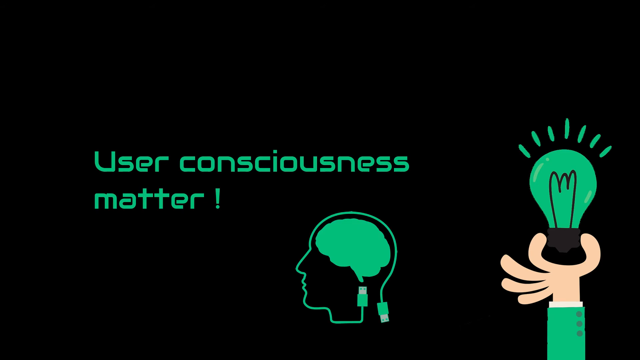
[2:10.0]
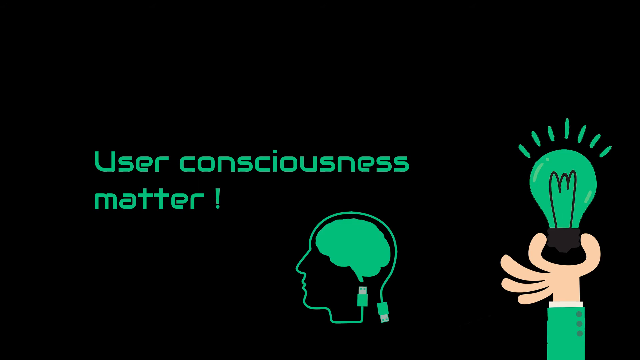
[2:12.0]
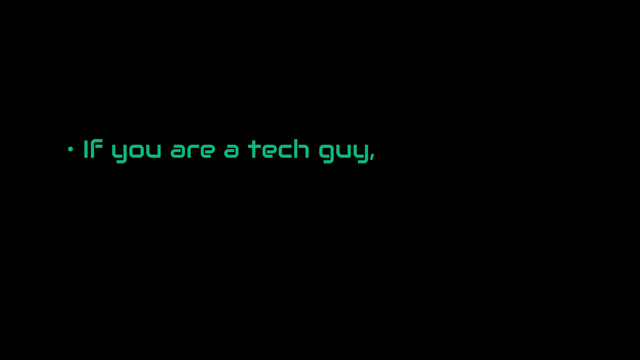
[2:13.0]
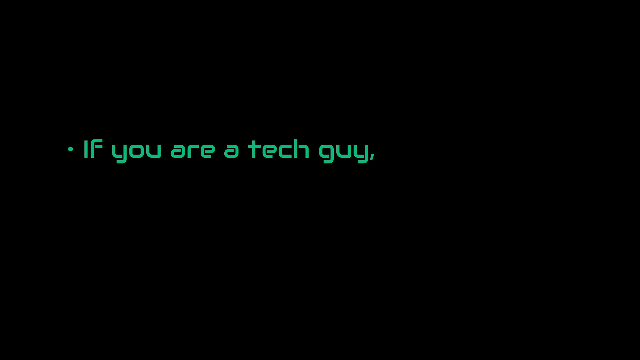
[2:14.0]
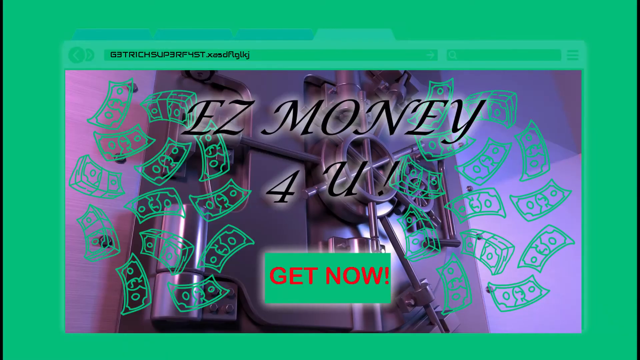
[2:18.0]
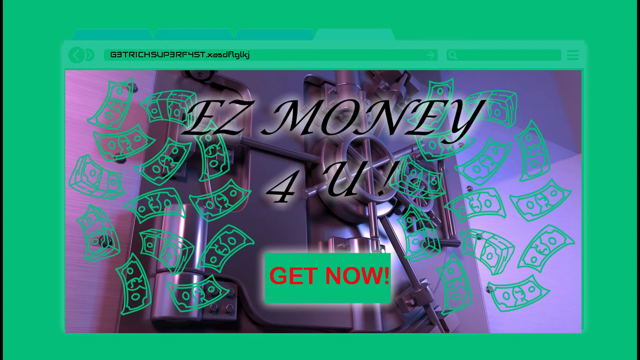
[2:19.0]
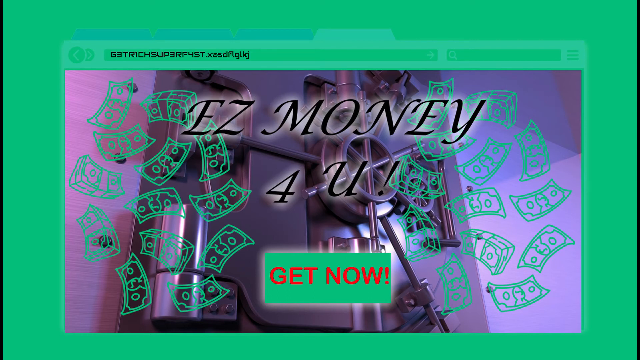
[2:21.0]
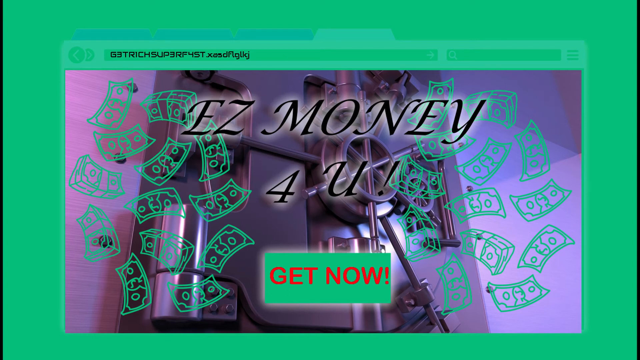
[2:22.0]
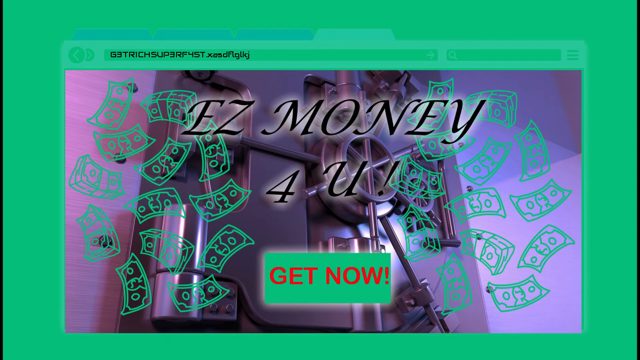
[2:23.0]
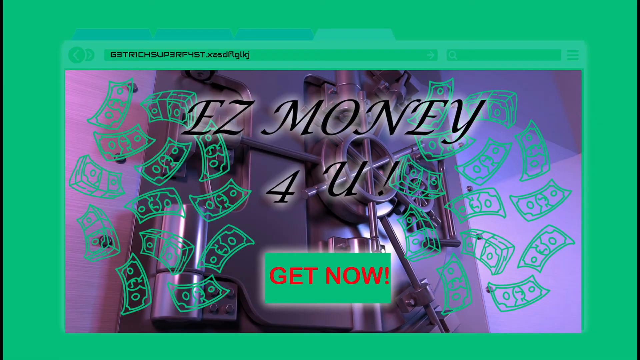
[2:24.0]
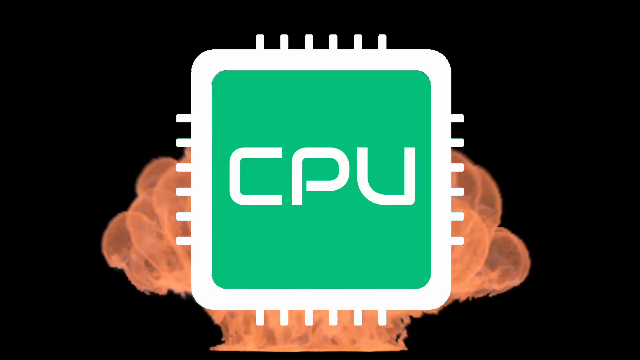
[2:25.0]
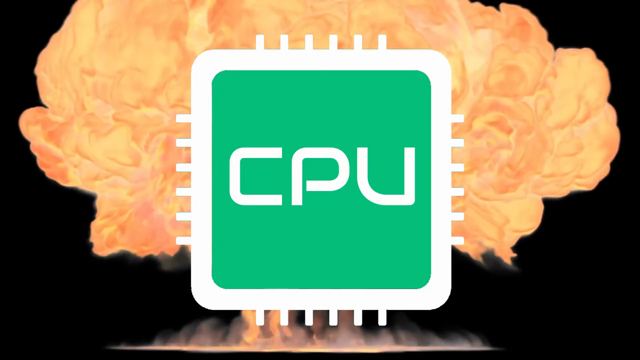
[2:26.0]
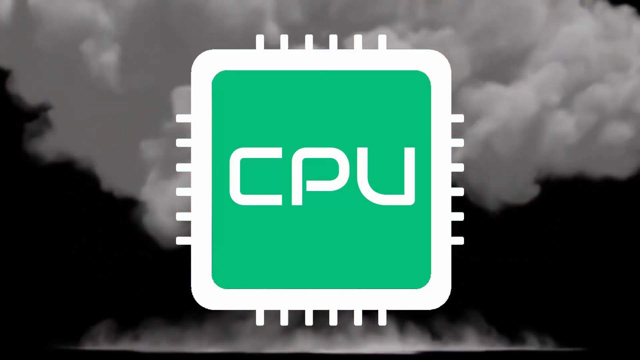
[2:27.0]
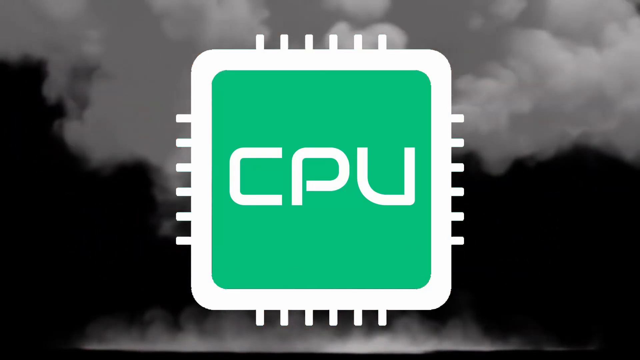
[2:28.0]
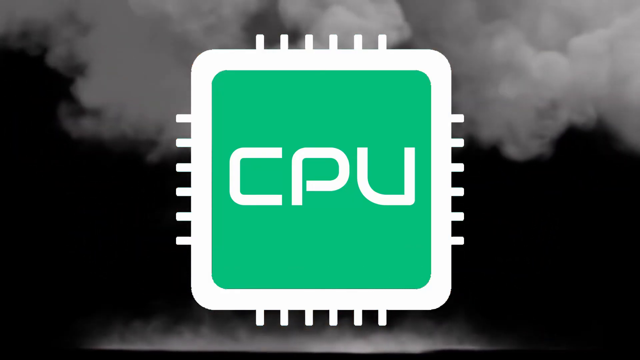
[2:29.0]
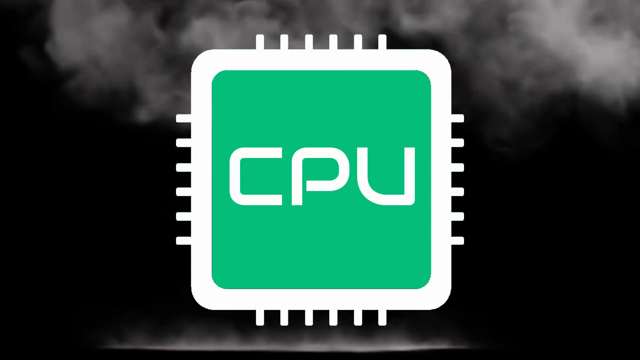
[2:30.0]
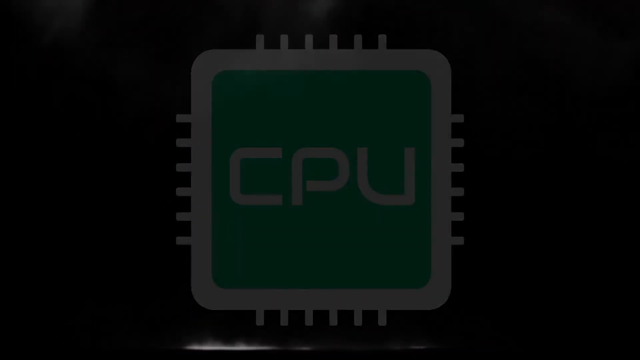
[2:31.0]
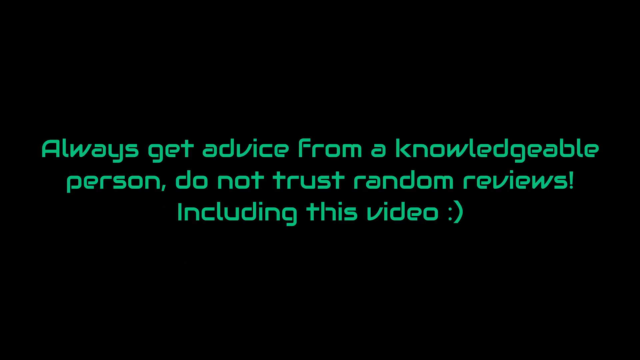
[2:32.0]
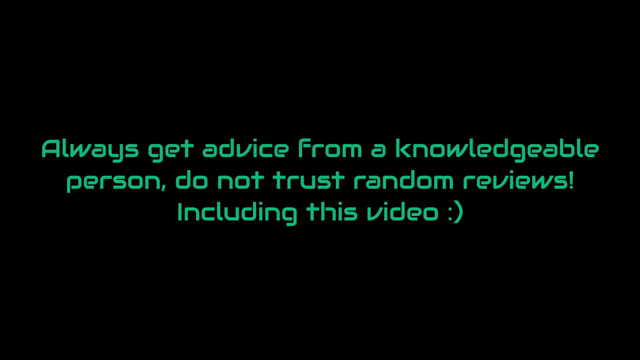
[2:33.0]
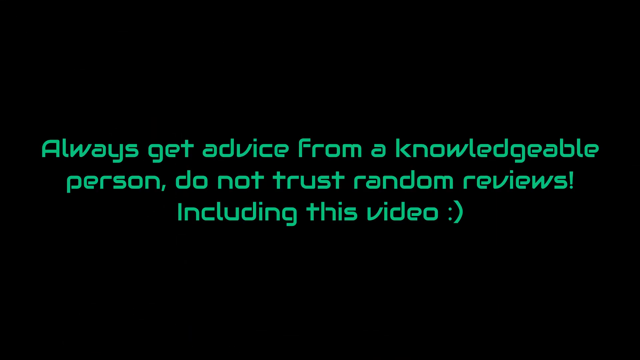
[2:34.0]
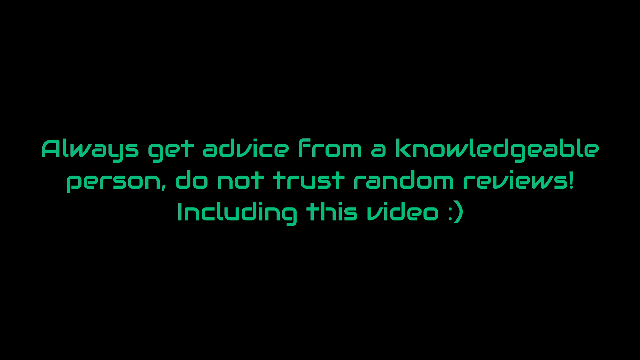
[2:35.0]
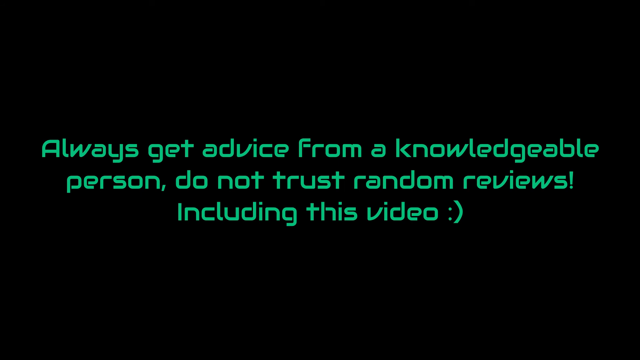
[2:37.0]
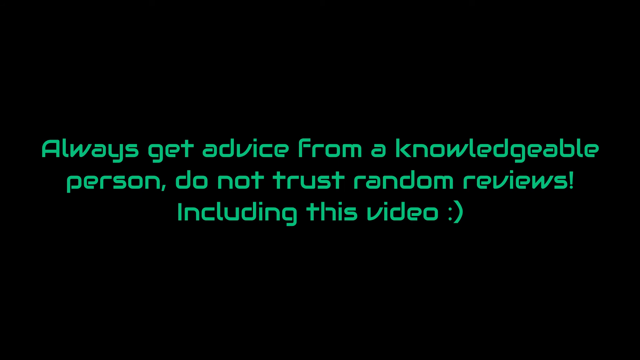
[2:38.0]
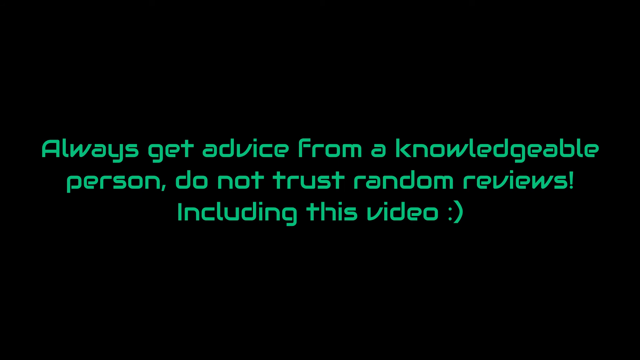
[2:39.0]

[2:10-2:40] The text "user consciousness matter" is shown in the same green color and font, with an exclamation point added. What appear to be USB connectors form the outline of a head with a brain; the USB running around the front of the neck appears to plug into the brain, while the other leads down the back of the neck. A clip-art left hand with all five fingers and a green buttoned sleeve holds a light bulb in the same green, with green light. The scene fades to a new screen reading "if you are a tech guy", with a bullet point, and another bullet point reading "update devices regularly". A new page then reads "EZ Money 4U!", showing a vault surrounded by what looks like fake money on a green screen that looks very scammy. A URL reads "get rich super fast" with numbers in place of some letters, followed by random text. A CPU symbol appears on screen and looks like it is exploding. Text reads "always get advice from a knowledgeable person. Do not trust random reviews, including this video", with a typed smiley face at the end.